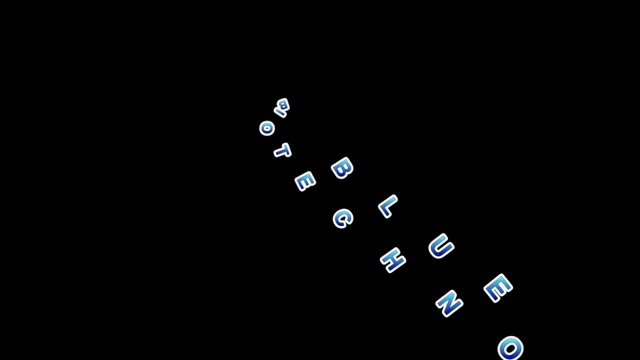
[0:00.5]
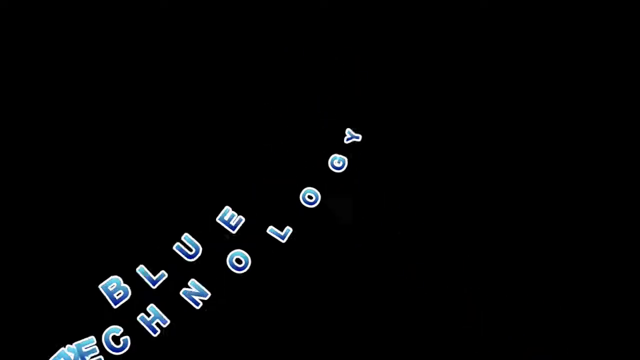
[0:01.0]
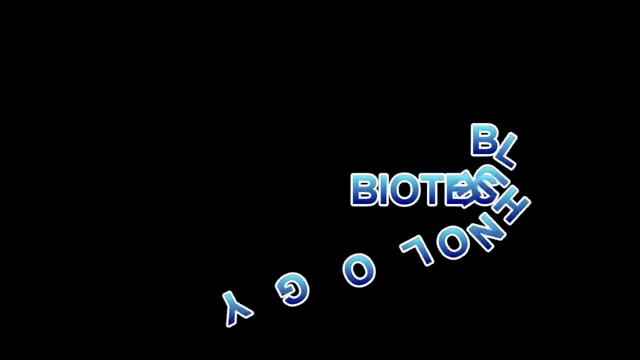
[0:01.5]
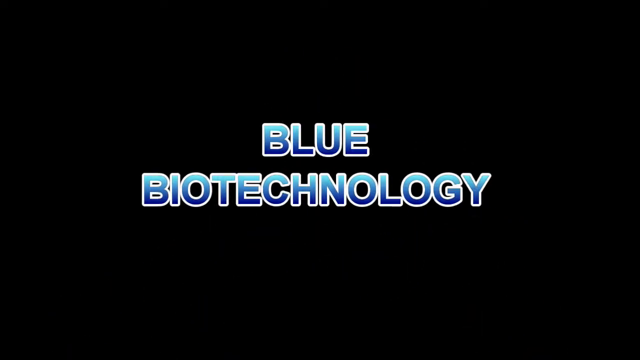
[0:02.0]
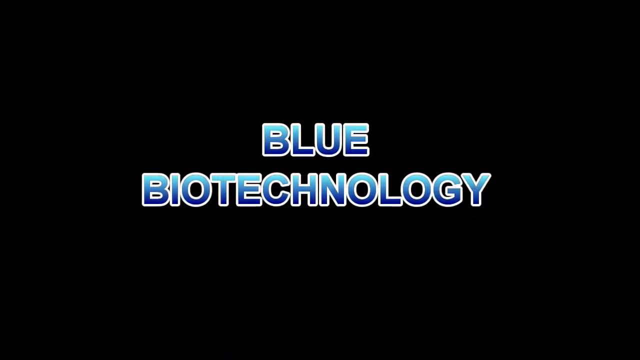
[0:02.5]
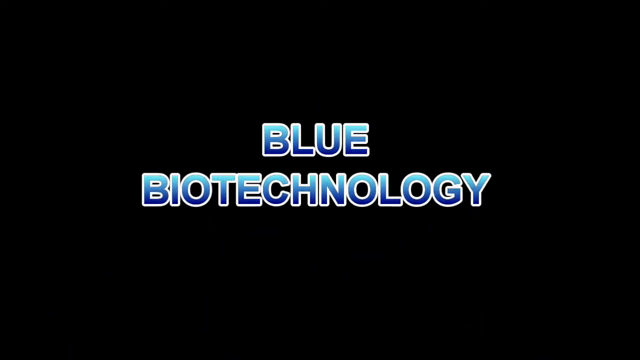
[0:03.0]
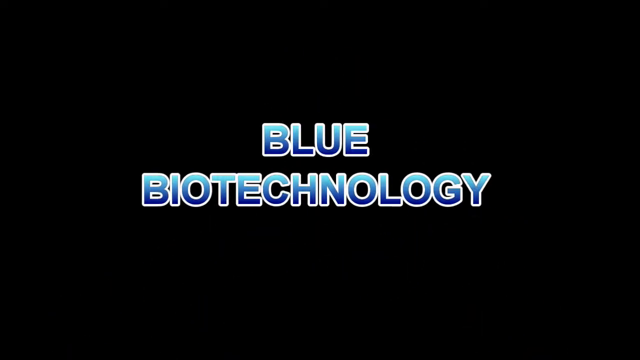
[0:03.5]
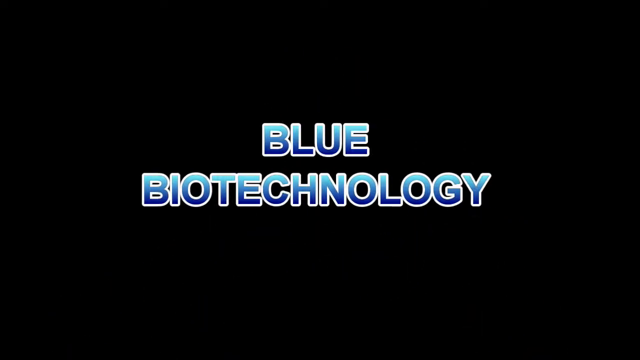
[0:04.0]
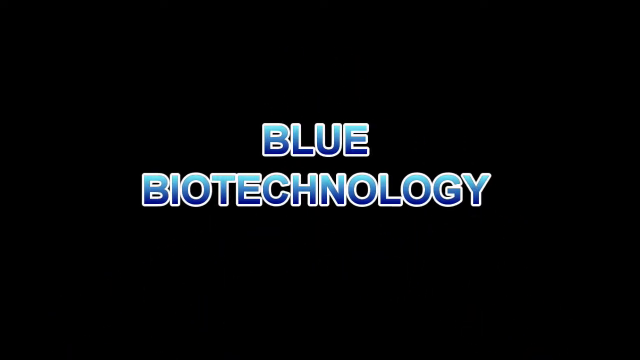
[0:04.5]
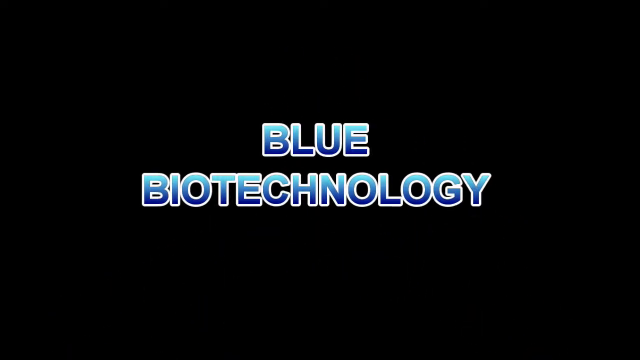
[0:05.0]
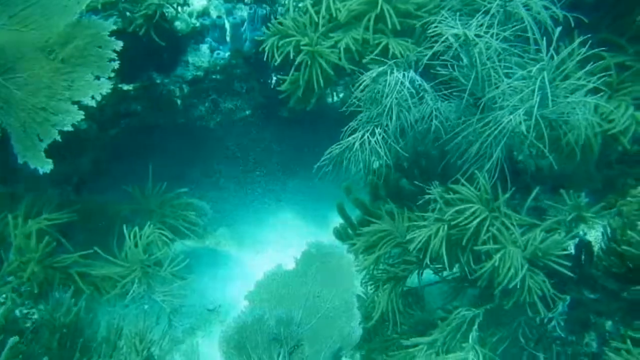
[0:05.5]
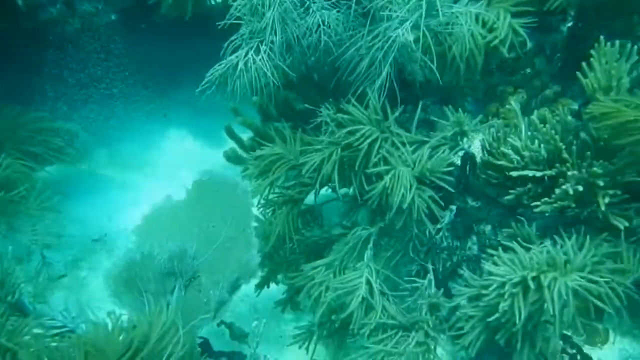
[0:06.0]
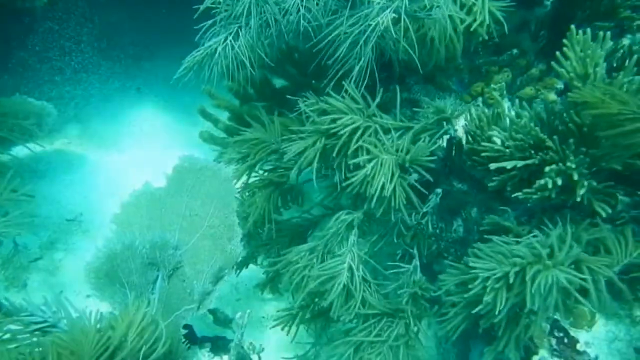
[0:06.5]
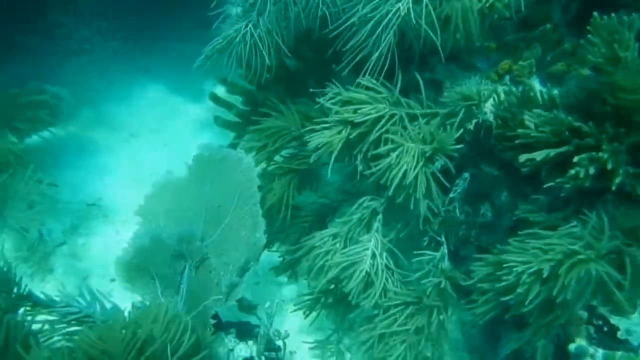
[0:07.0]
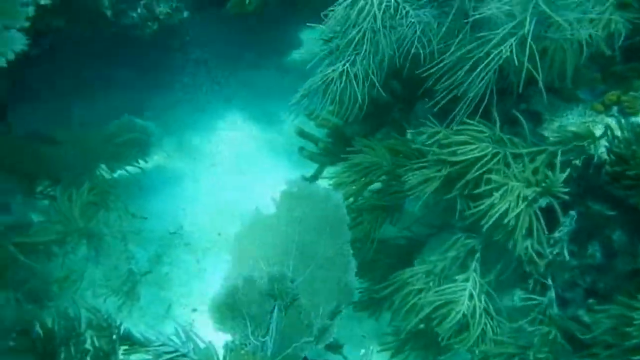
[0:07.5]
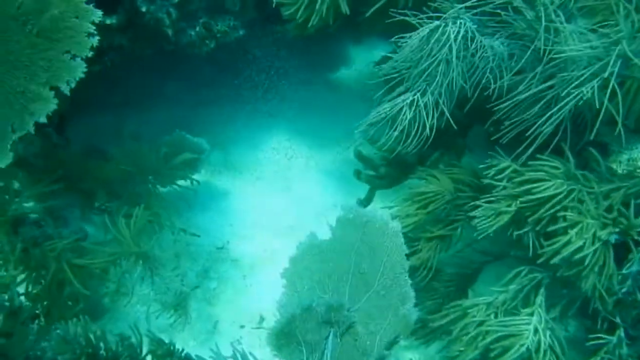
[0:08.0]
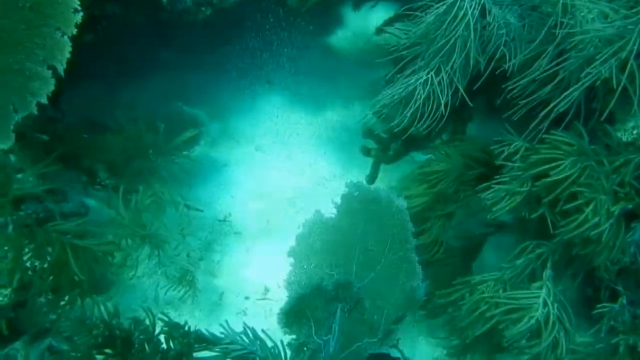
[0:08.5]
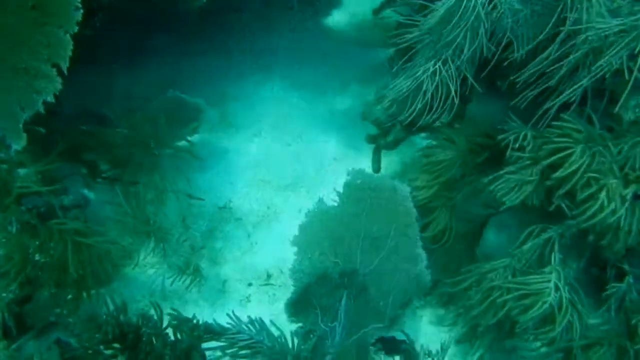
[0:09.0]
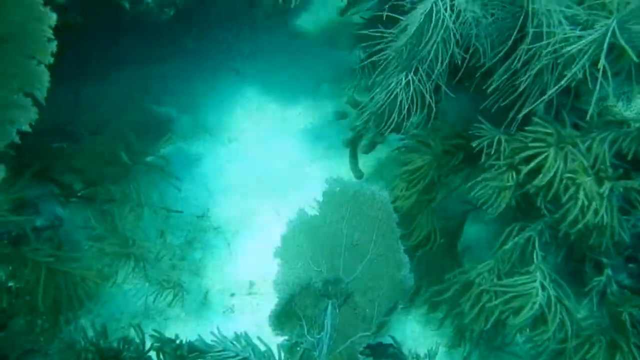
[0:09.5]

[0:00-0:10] Capitalized block letters scroll onto a black screen. They start at the bottom of the screen, scroll upwards on the left-hand side, around in a circle, and down towards the right, ending up in the middle of the screen in two lines that read "Blue Biotechnology", with "Blue" on the top line and "Biotechnology" on the bottom line. The letters are in multiple shades of blue, darker on the bottom of the letters and lighter on the top, with white shadowing. The image then changes to plants underneath water. The seabed looks like white sand, and there are multiple green plants under the water.